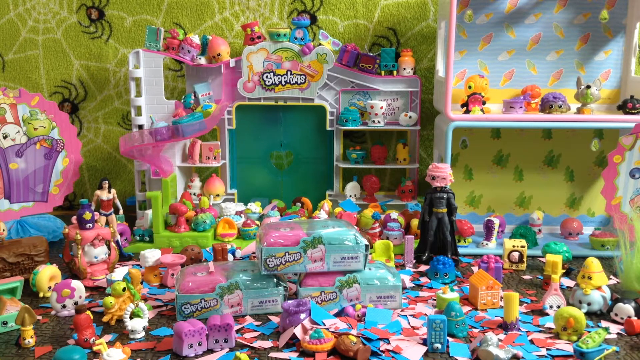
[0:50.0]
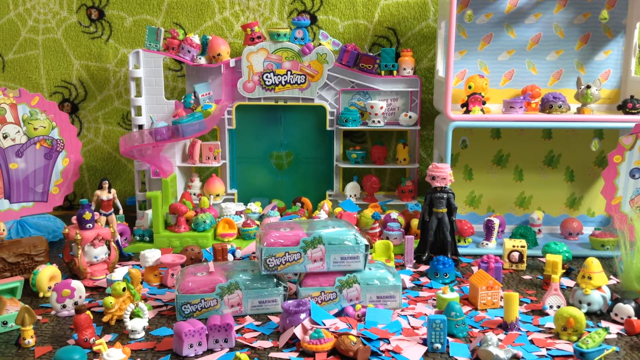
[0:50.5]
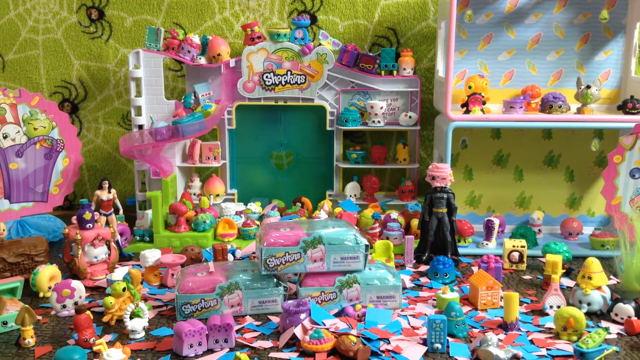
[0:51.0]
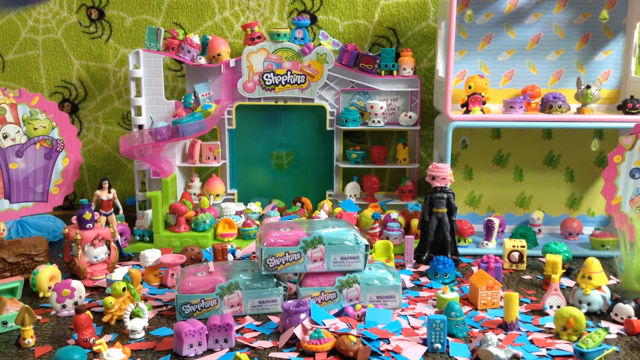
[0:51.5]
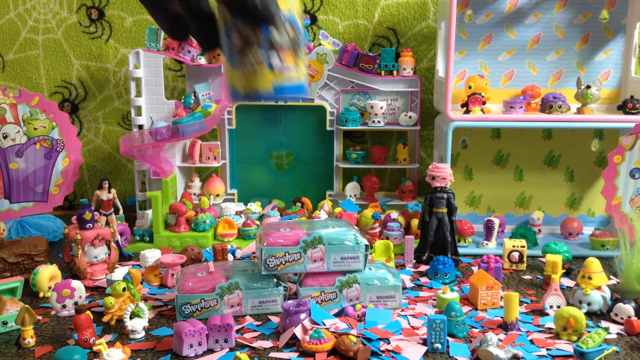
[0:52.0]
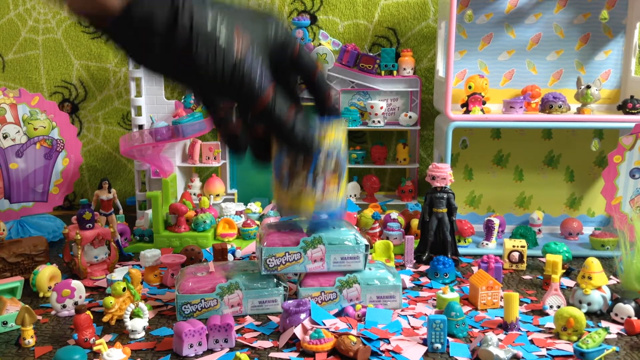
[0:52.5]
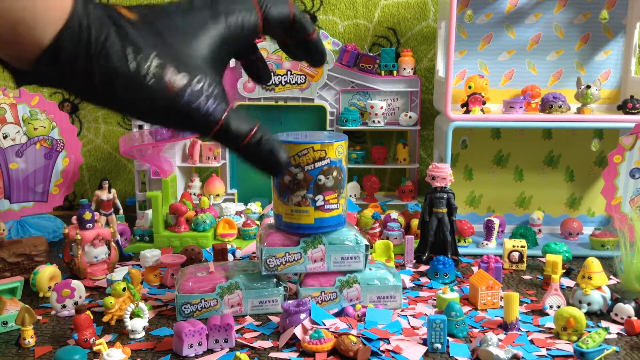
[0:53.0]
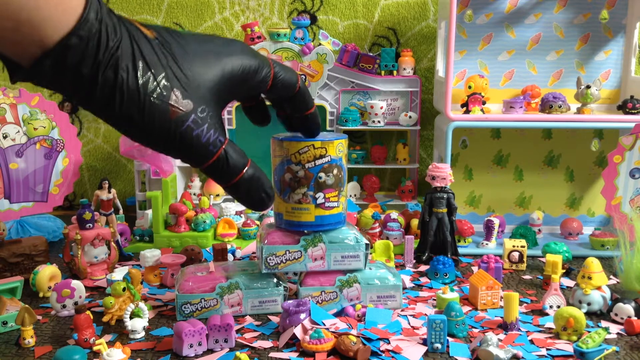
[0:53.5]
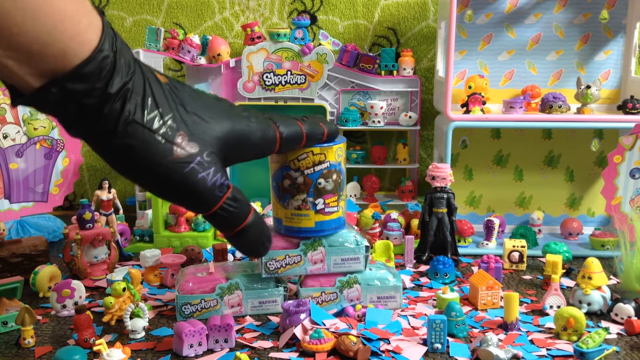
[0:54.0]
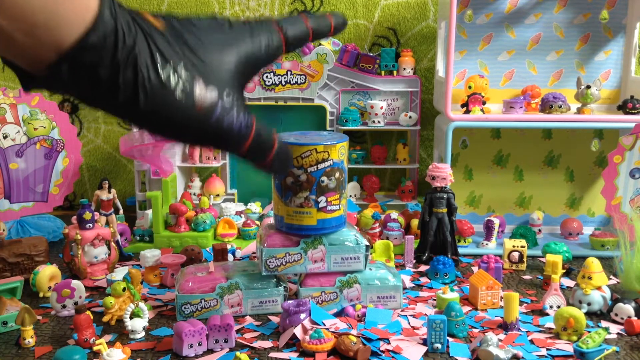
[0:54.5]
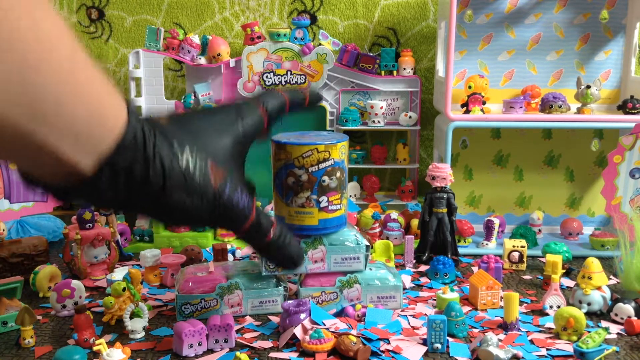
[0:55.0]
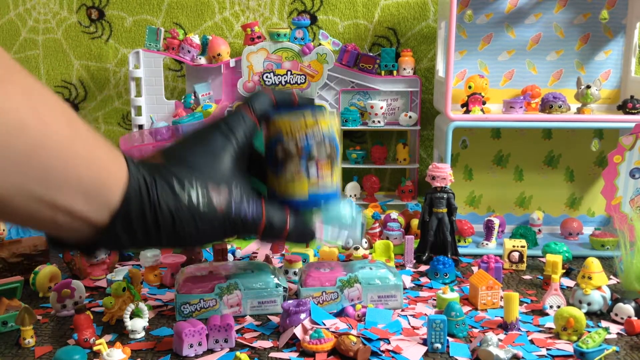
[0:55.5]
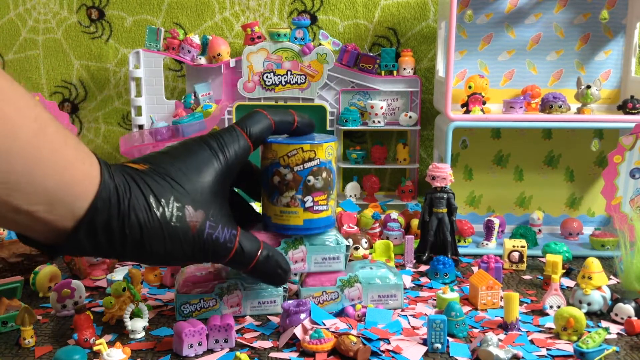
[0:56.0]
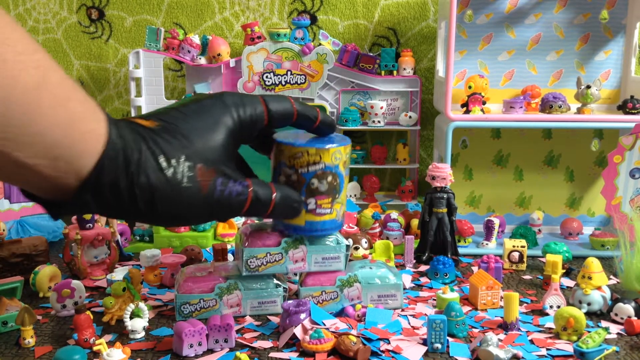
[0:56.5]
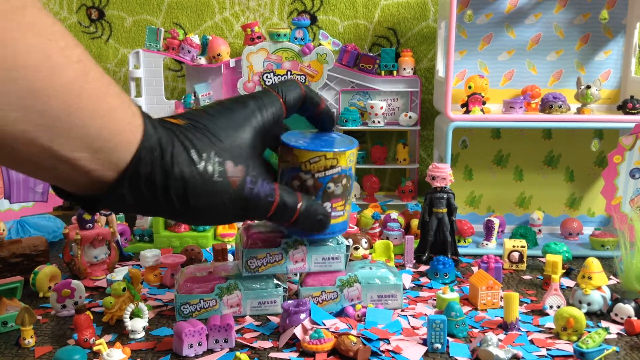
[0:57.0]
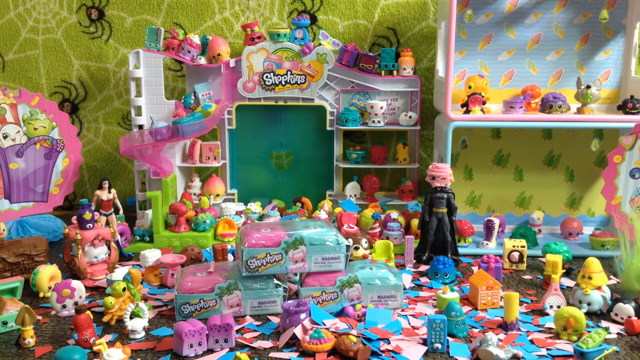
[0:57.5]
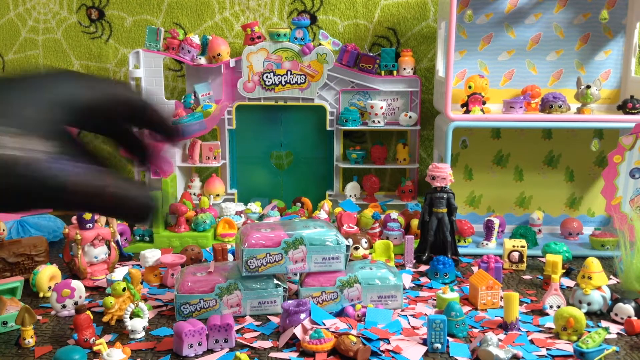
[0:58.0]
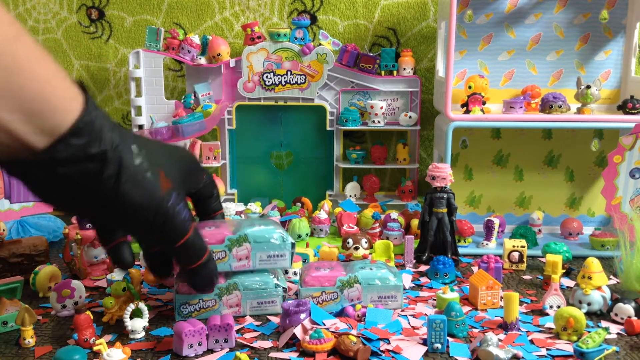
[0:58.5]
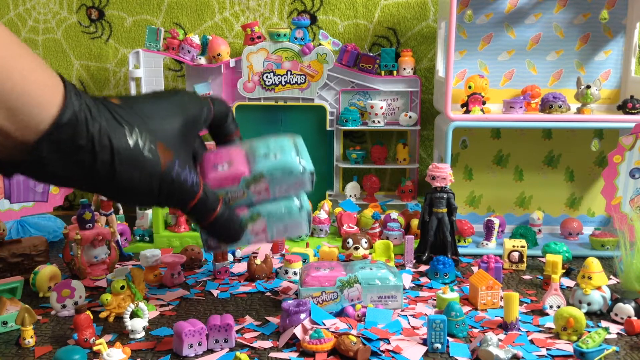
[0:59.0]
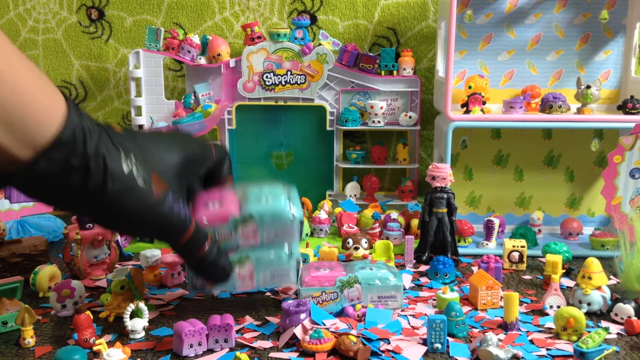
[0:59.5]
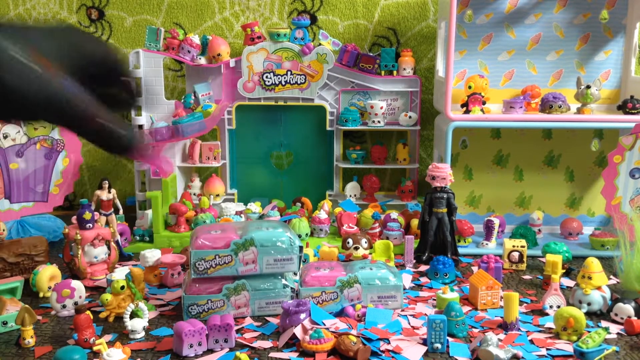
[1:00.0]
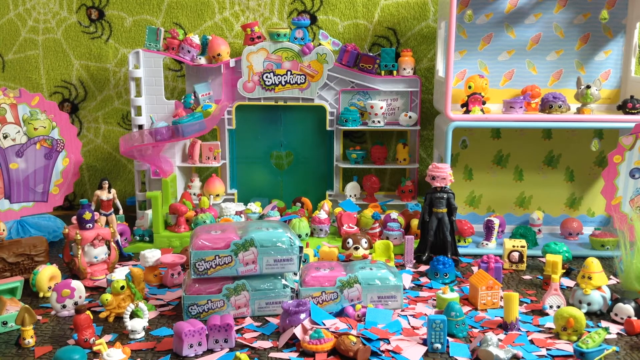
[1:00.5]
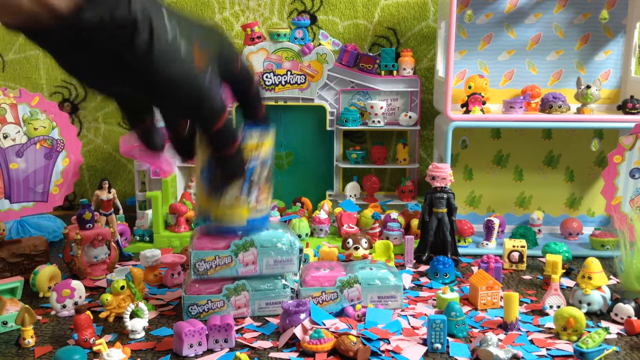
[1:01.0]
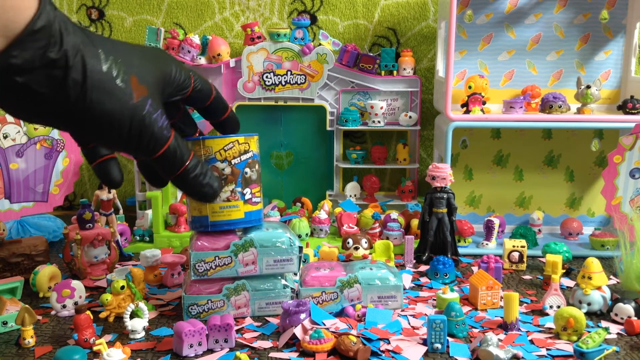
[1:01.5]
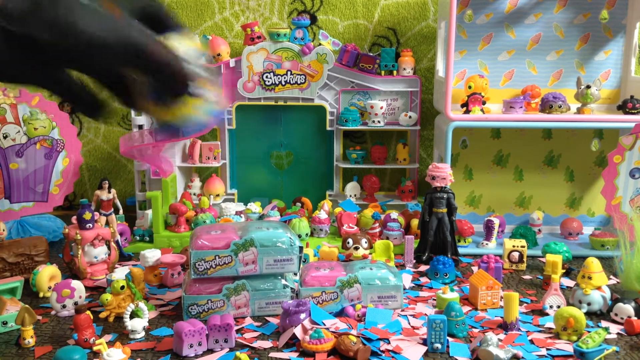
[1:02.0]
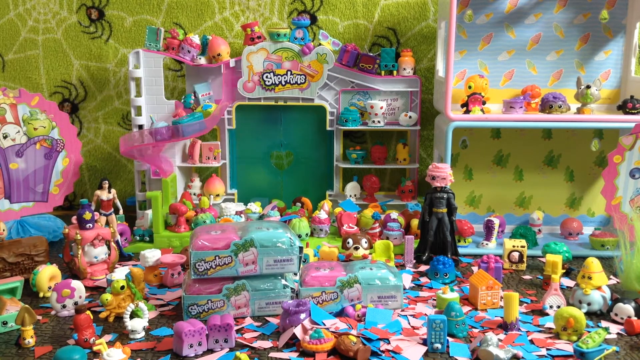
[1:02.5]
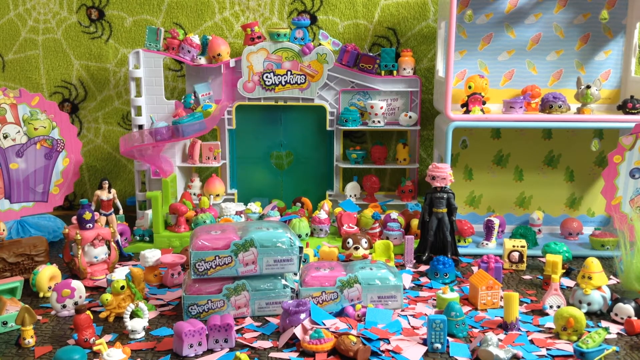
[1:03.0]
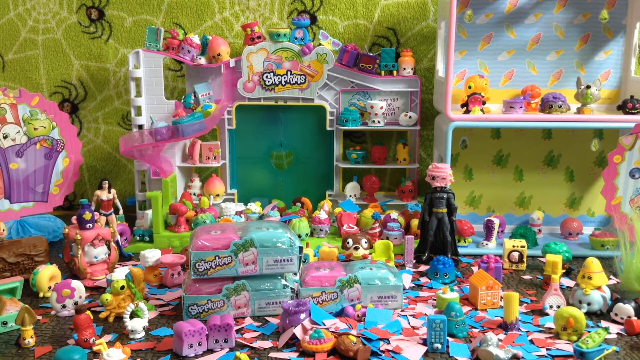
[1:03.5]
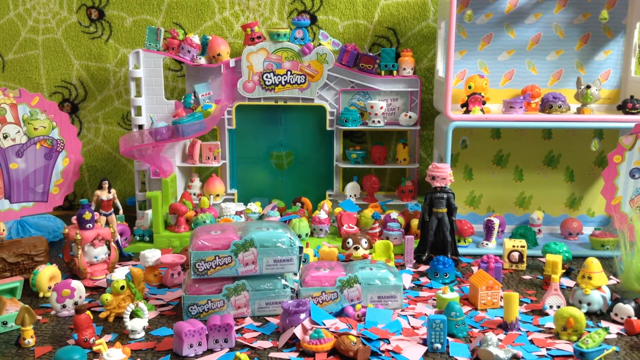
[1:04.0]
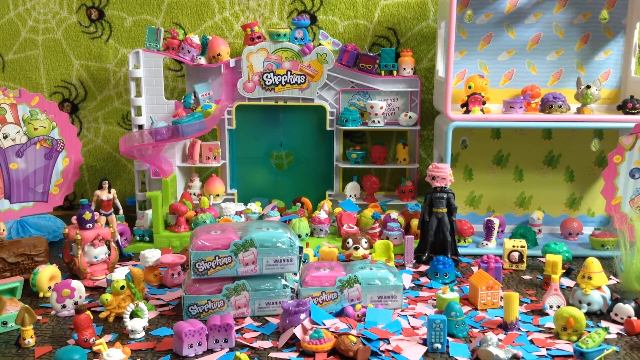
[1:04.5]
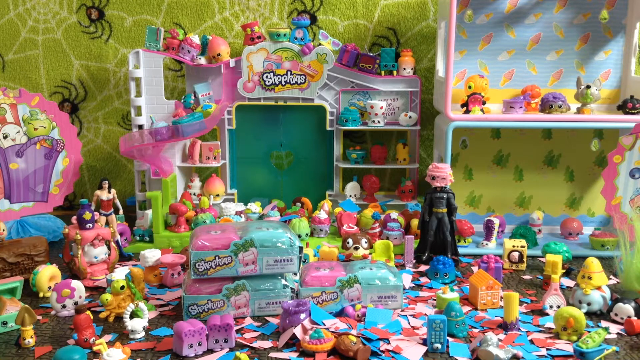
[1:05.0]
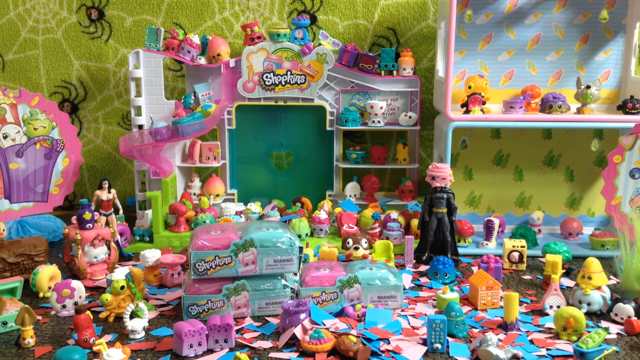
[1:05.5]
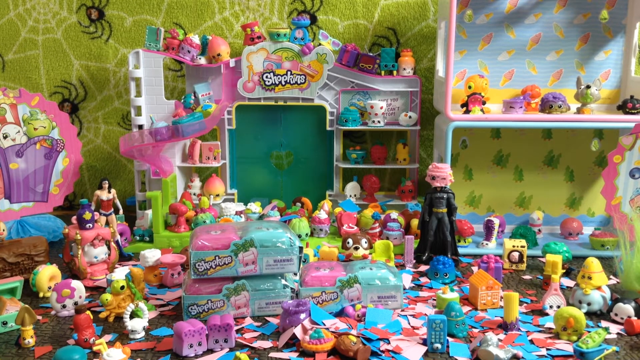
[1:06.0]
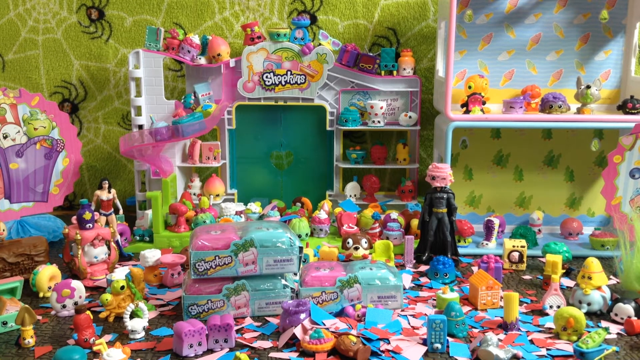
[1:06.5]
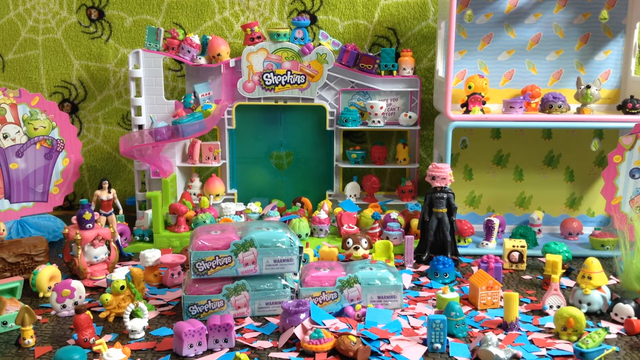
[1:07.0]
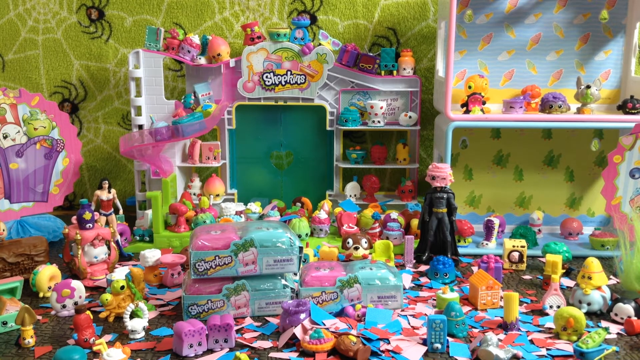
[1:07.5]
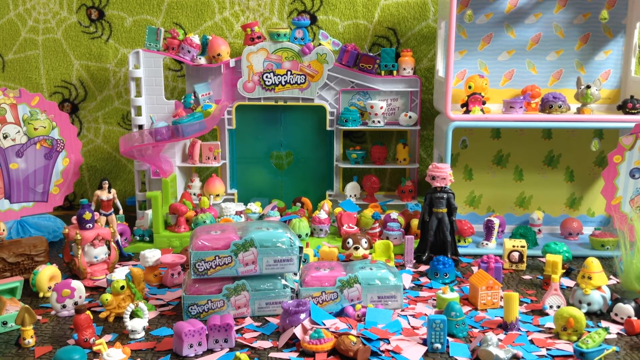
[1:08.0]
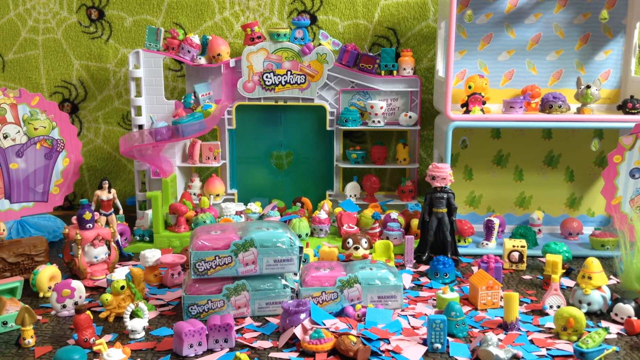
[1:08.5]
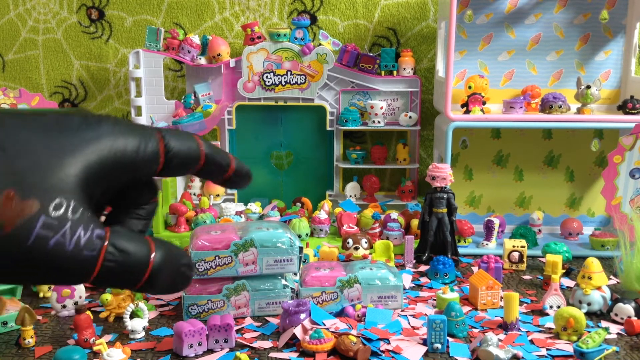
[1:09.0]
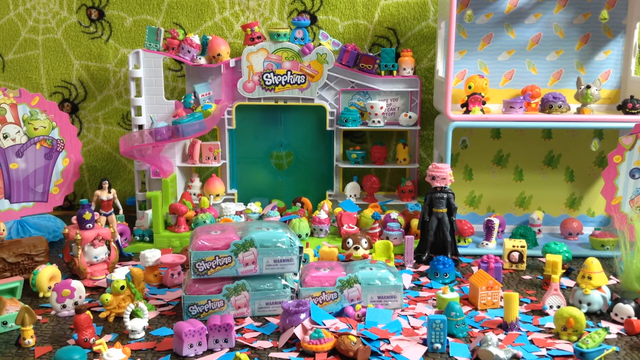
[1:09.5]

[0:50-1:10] The room is full of toys, and the hand of a person wearing black gloves appears. There is a blue can on top of the toys. There is a Batman toy in a black suit and another of a lady wearing a red blouse and black pants. The wall is green with white web designs, spiders drawn on it, and some green patches. Most of the toys are purple, some are pink, and some are blue. A yellow duck toy is placed on top of a cabinet, and an orange house toy is on the floor.